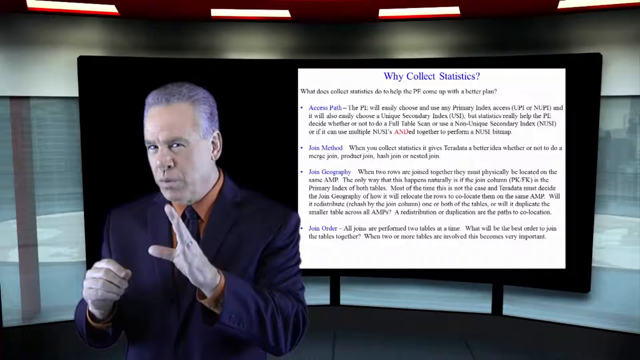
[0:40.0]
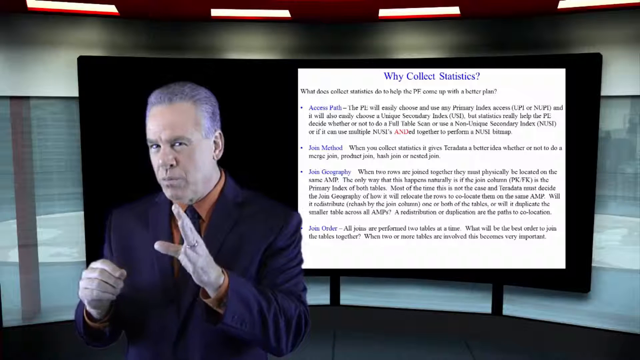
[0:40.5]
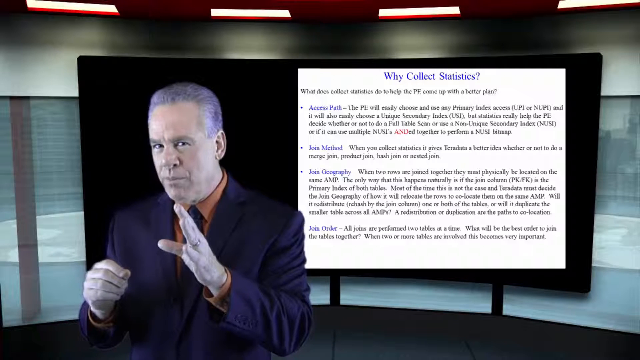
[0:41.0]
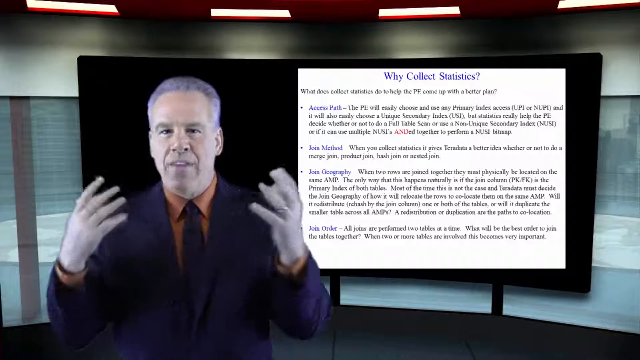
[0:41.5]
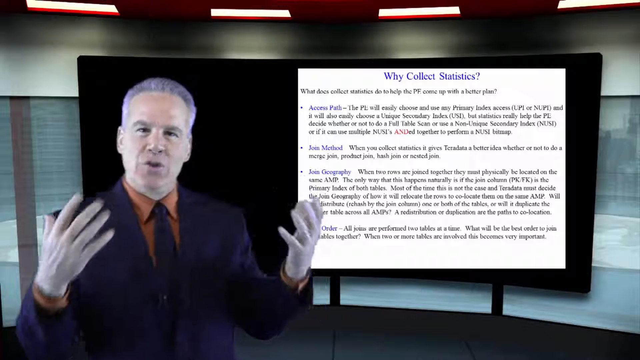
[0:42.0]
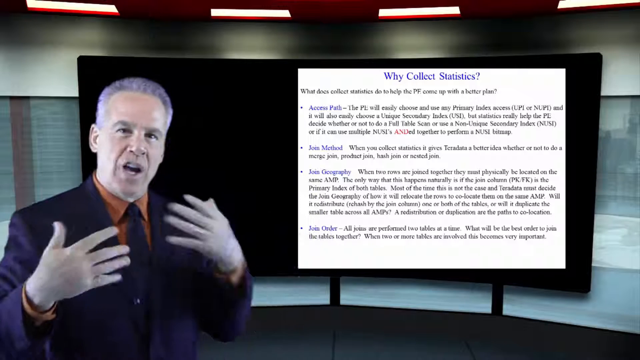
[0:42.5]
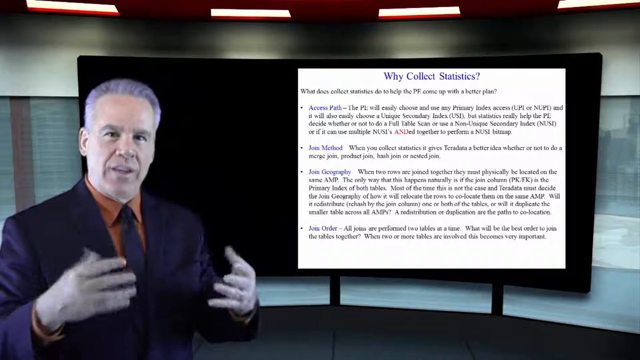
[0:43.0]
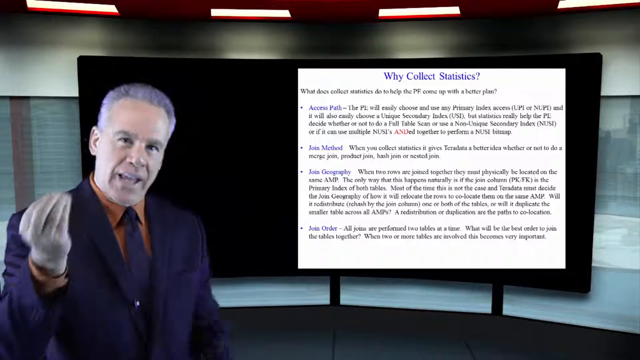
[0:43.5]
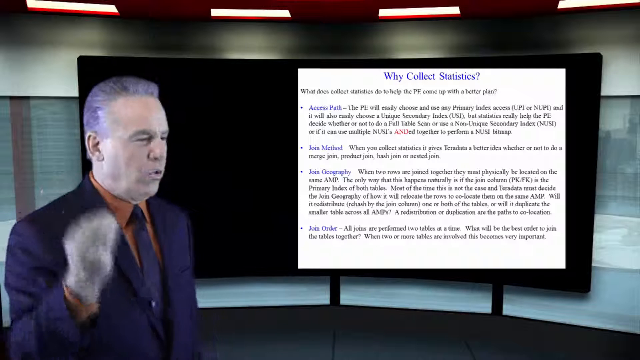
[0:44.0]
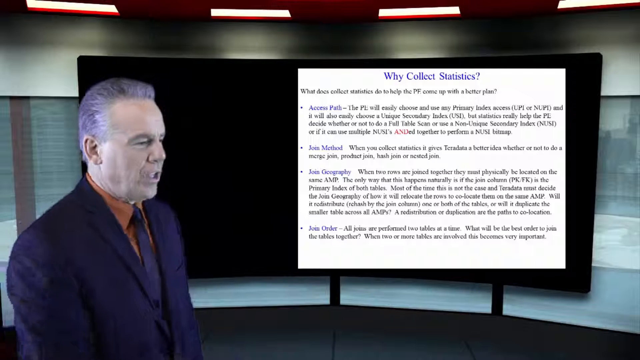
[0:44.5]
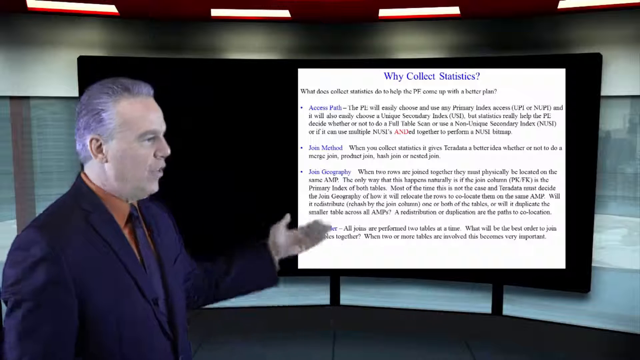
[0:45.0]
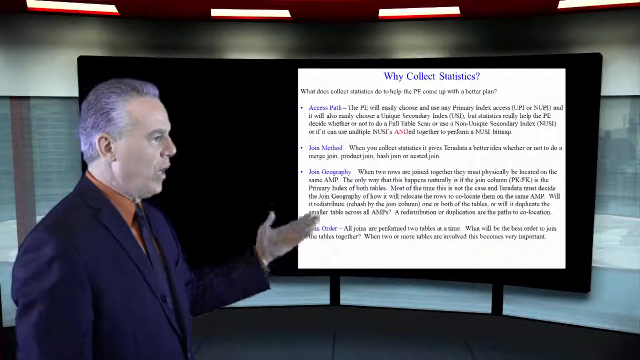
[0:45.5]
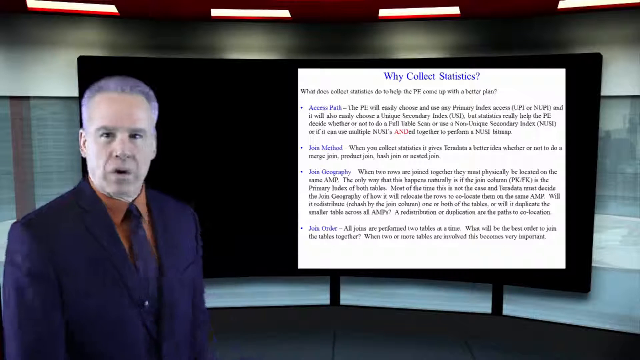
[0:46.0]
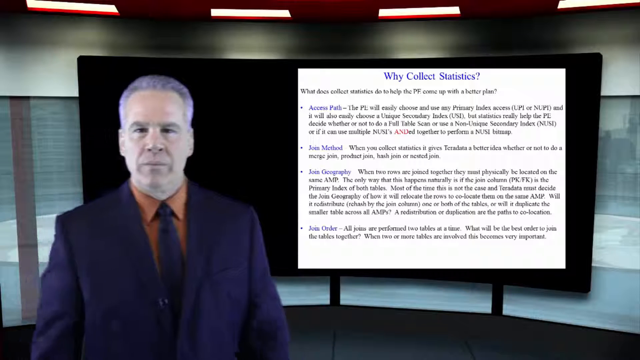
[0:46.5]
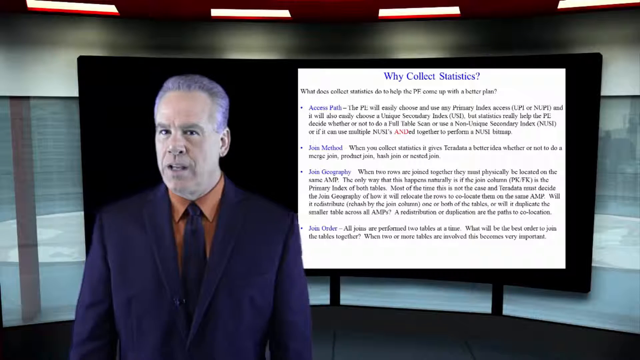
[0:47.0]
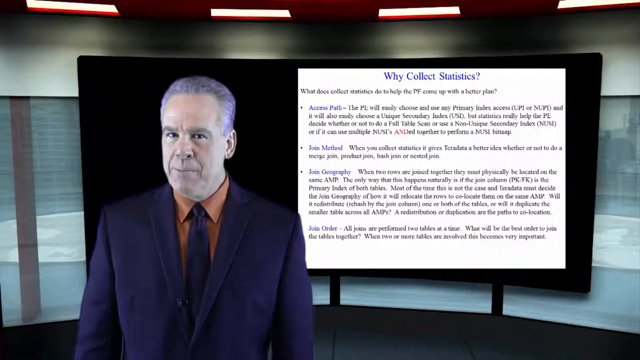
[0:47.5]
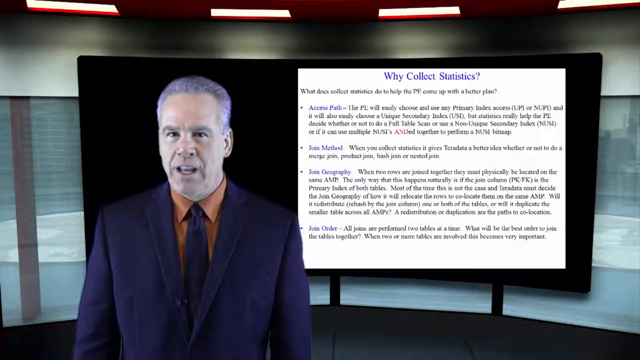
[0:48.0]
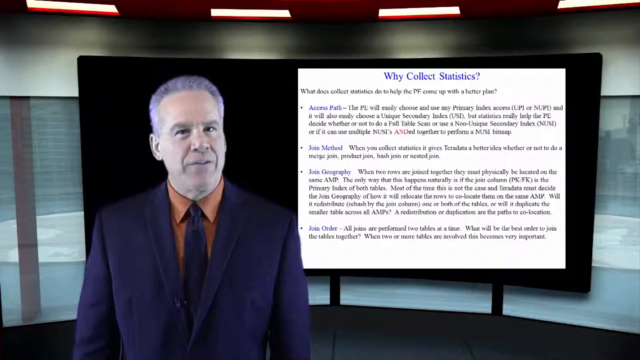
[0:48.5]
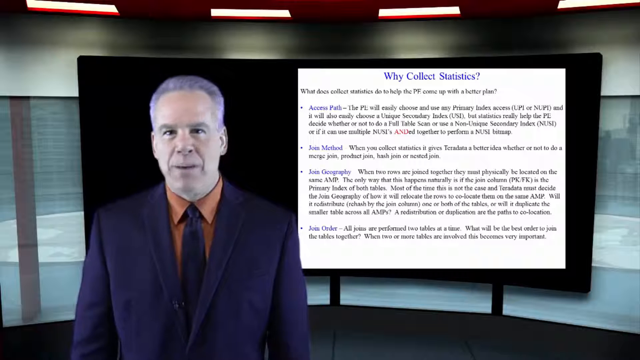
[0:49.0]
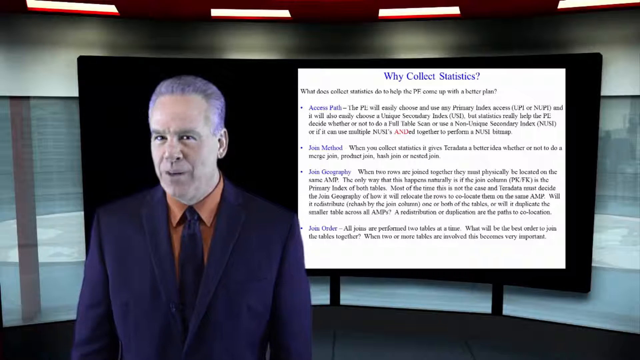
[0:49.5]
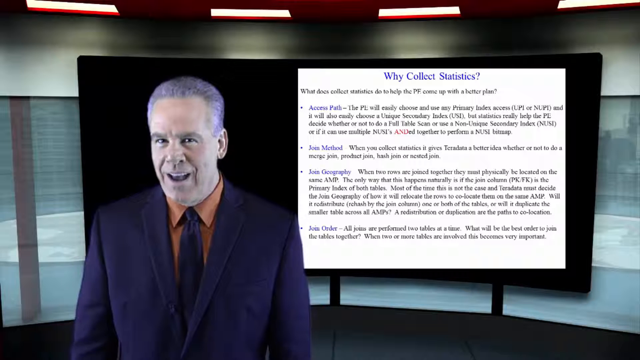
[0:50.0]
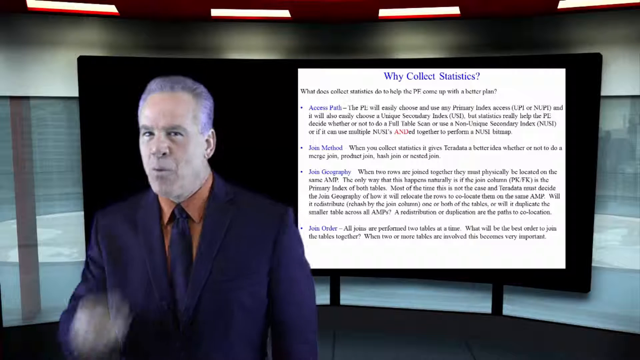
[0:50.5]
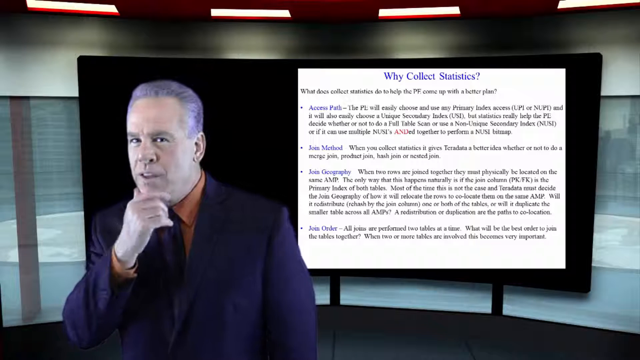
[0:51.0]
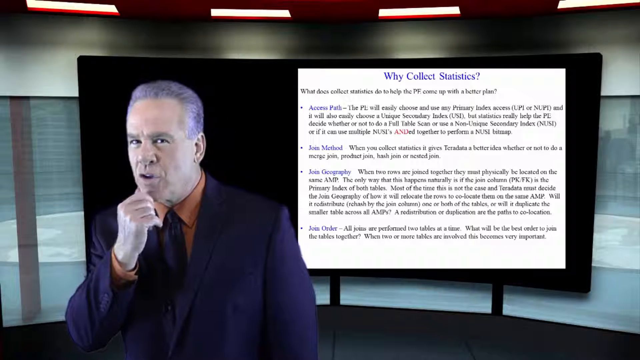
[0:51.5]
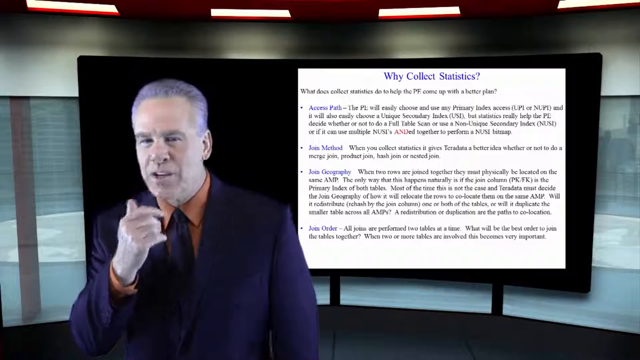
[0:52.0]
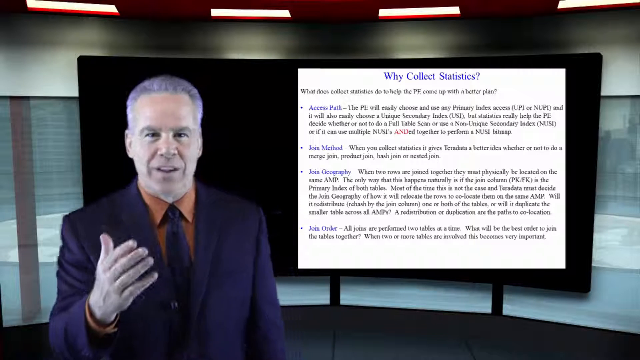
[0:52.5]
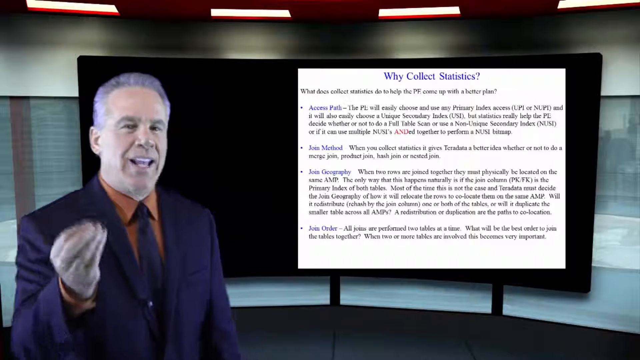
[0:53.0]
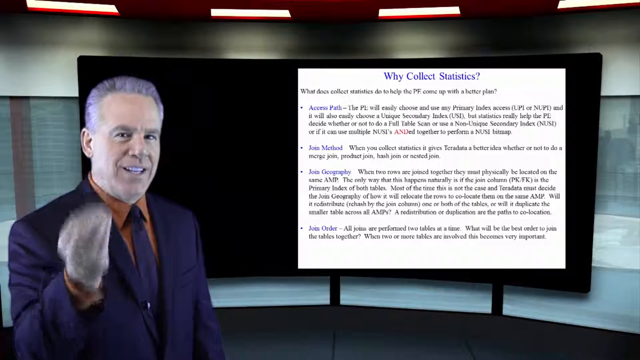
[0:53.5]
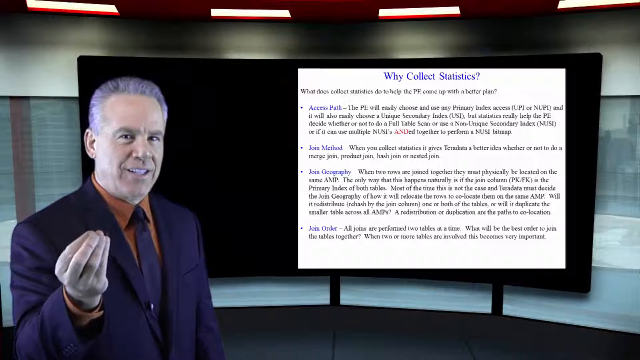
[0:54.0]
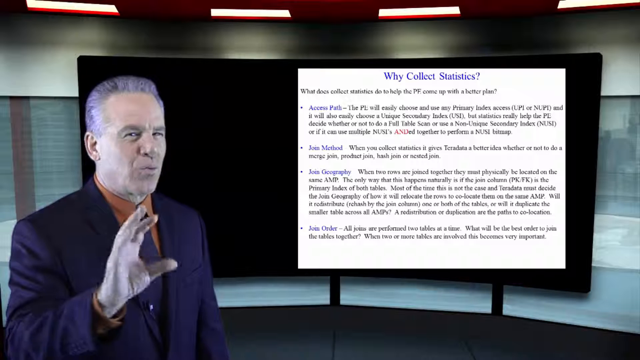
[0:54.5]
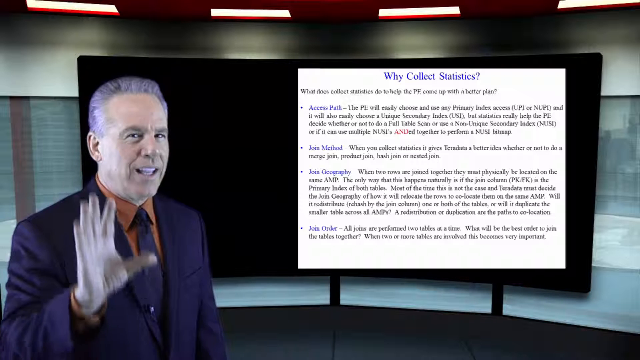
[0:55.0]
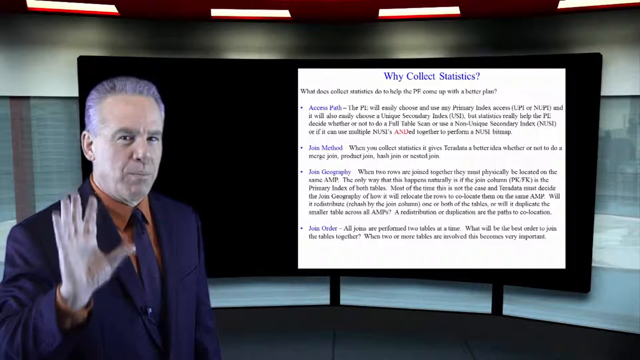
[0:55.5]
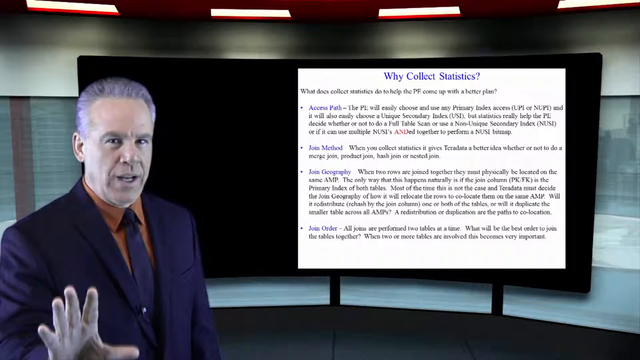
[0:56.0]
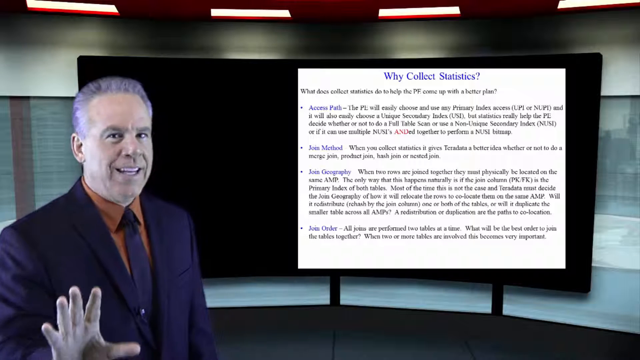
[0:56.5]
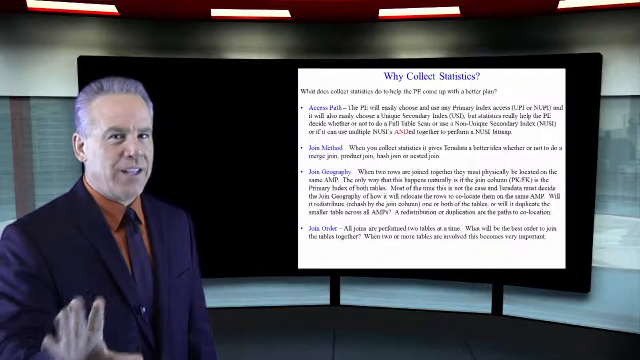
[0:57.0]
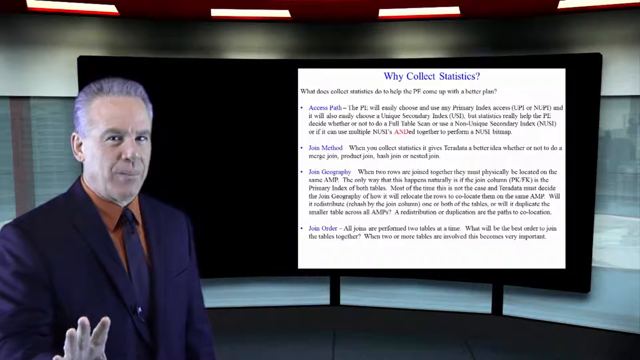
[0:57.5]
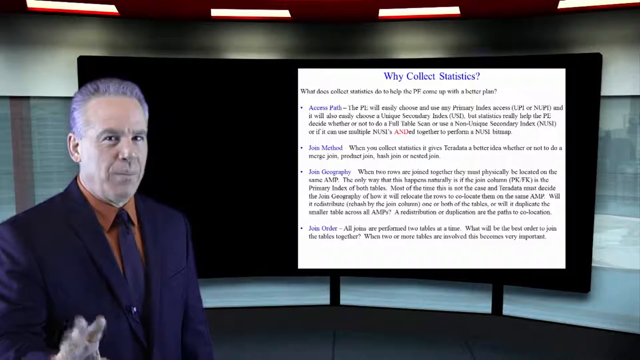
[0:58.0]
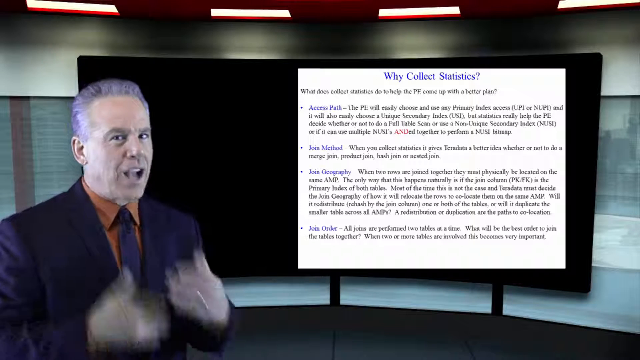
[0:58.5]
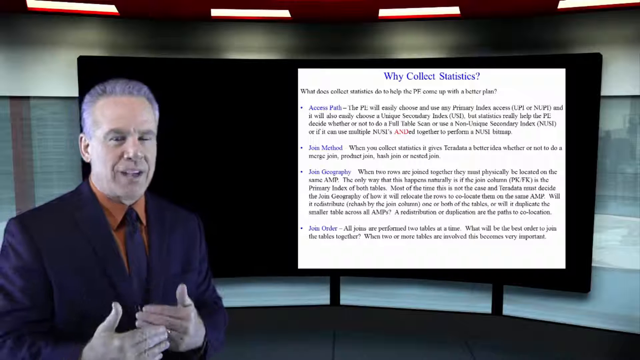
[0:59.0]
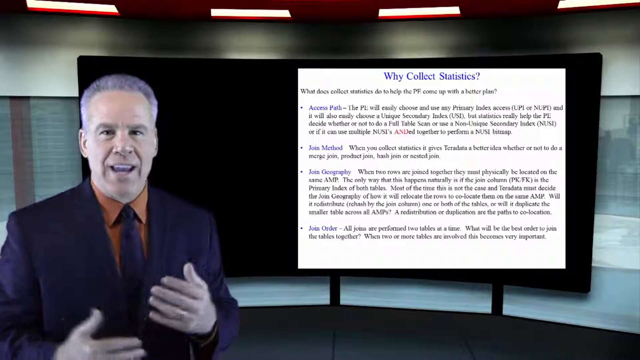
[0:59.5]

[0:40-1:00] A man stands with a large screen over his shoulder. The screen shows black text on a white background under the title "Why Collect Statistics?", with several paragraphs beneath it that are too small to read. The man is Caucasian, with short, darkish gray hair combed back from his forehead and temples, and wears a dark suit, a dark tie and a brown collared shirt. He talks in a very animated way, gesturing a lot with his hands, and appears quite emphatic. He faces directly towards the camera, as if speaking directly to the viewer, and appears to be saying something about the contents of the screen behind him.